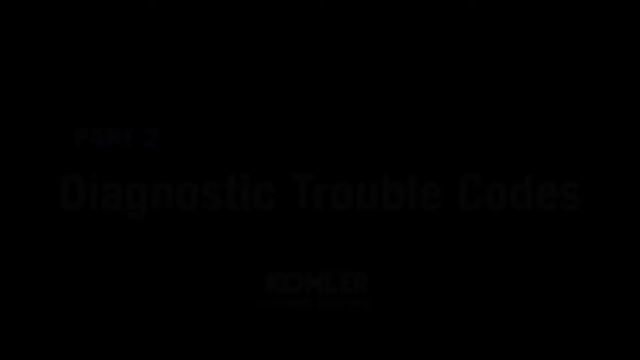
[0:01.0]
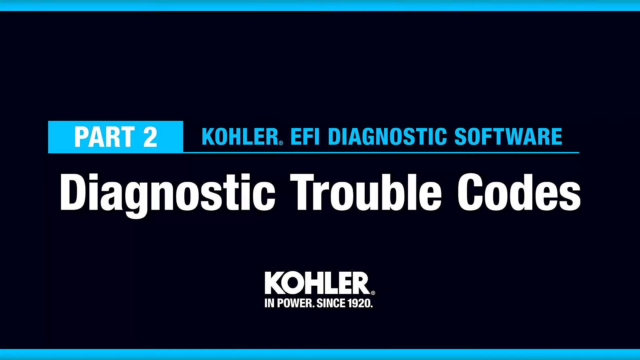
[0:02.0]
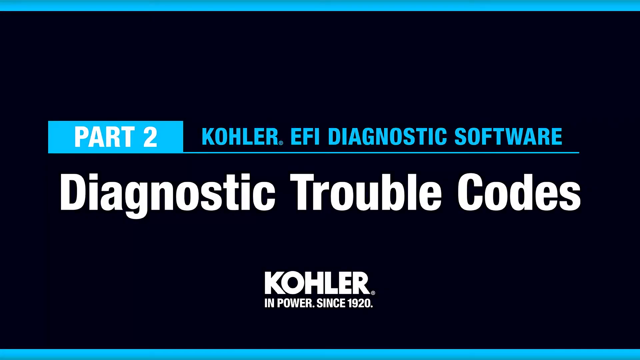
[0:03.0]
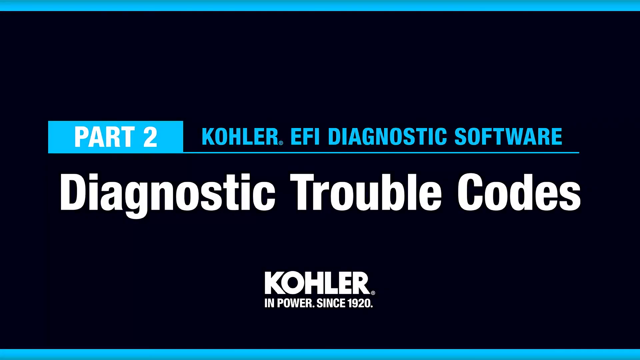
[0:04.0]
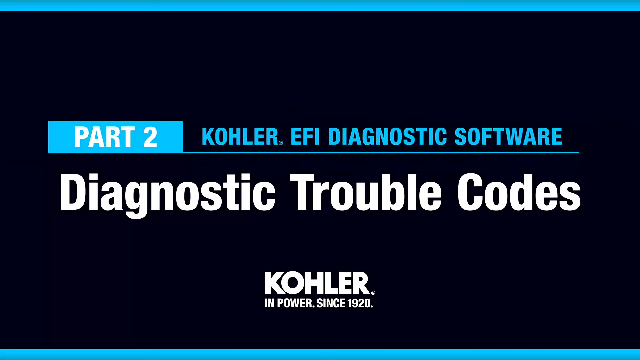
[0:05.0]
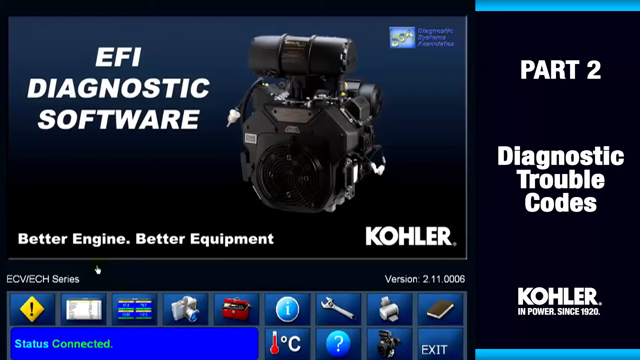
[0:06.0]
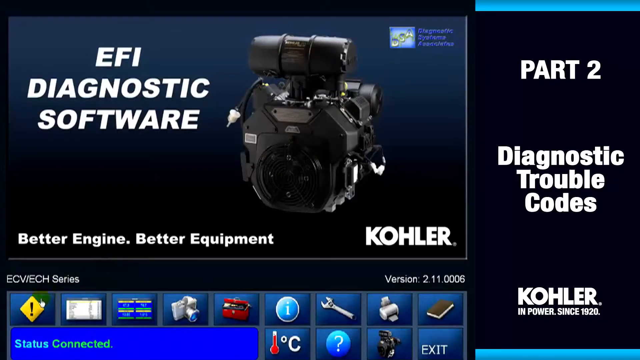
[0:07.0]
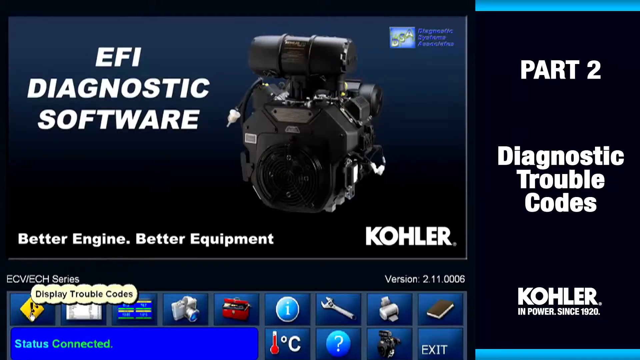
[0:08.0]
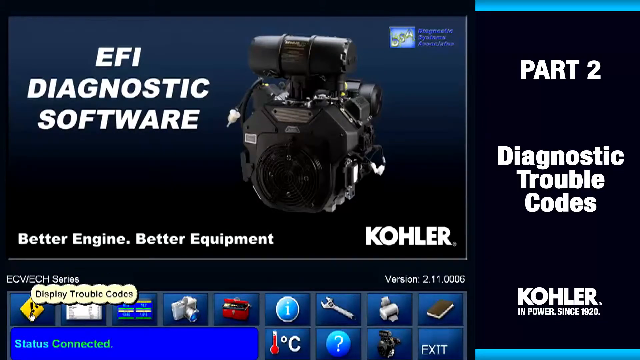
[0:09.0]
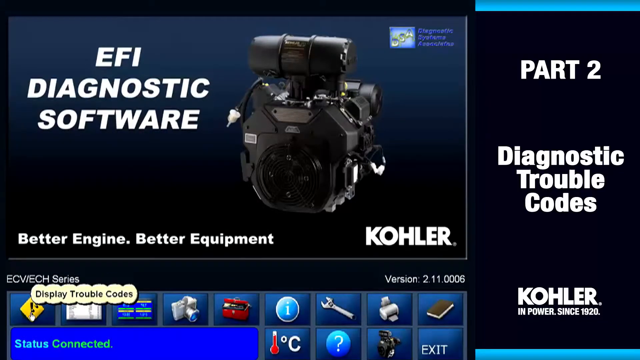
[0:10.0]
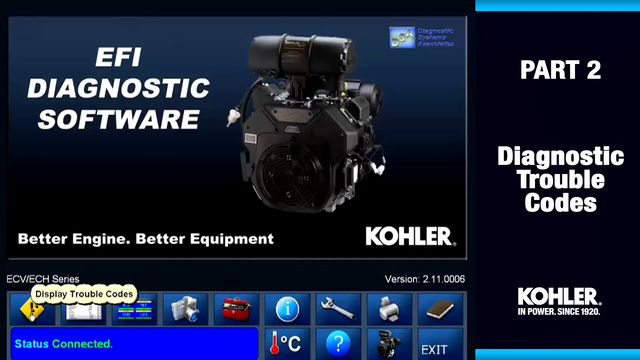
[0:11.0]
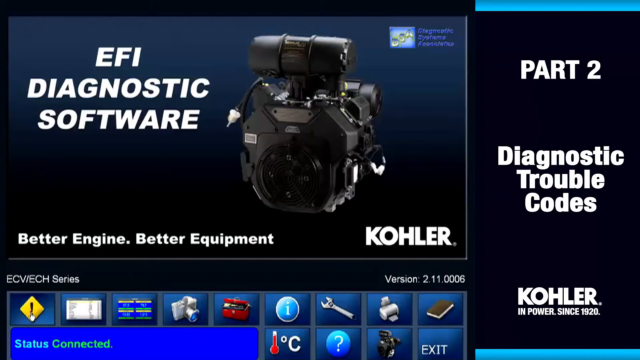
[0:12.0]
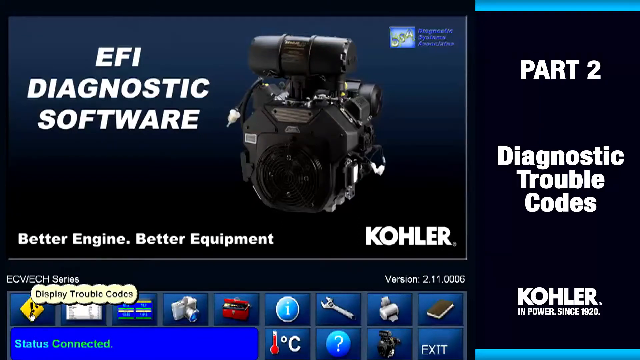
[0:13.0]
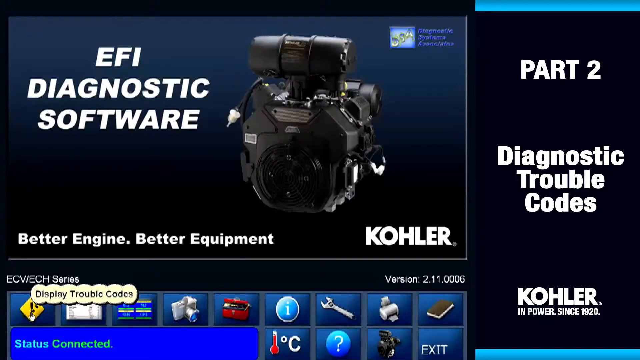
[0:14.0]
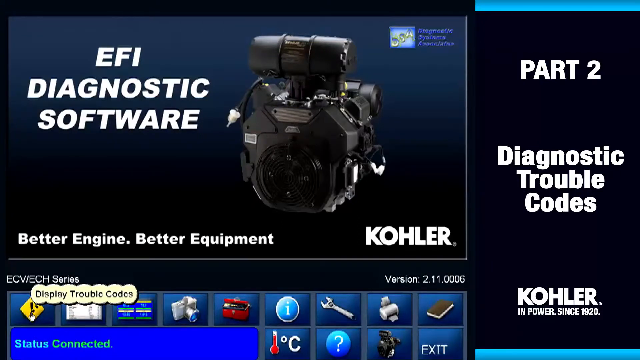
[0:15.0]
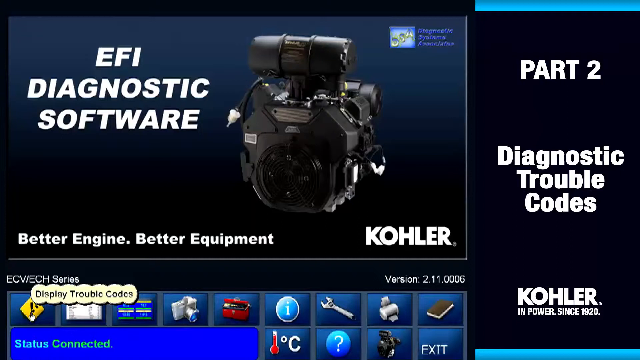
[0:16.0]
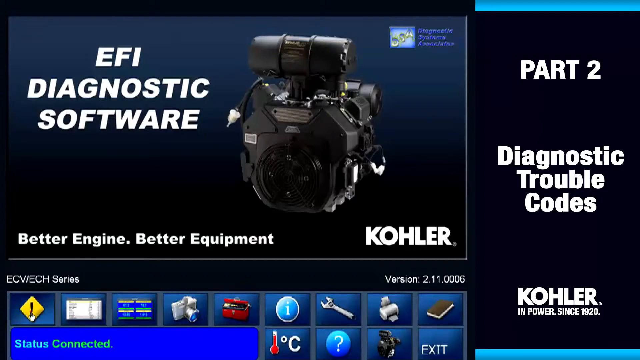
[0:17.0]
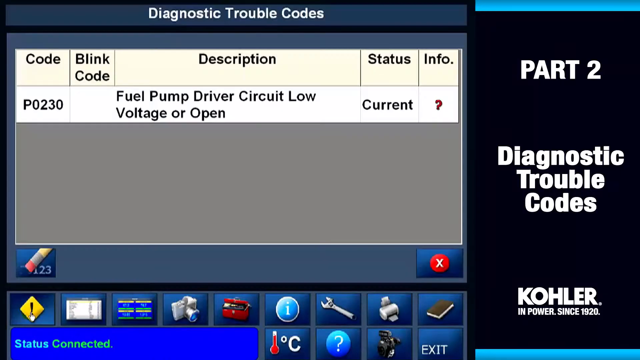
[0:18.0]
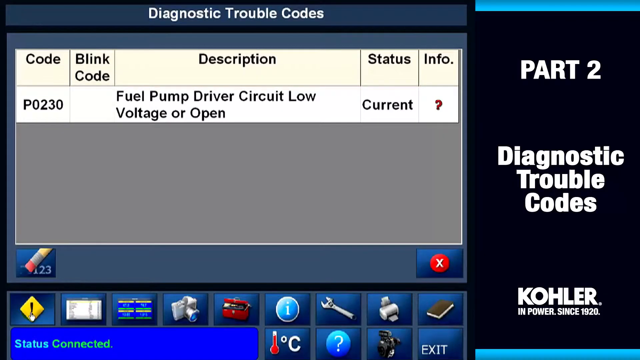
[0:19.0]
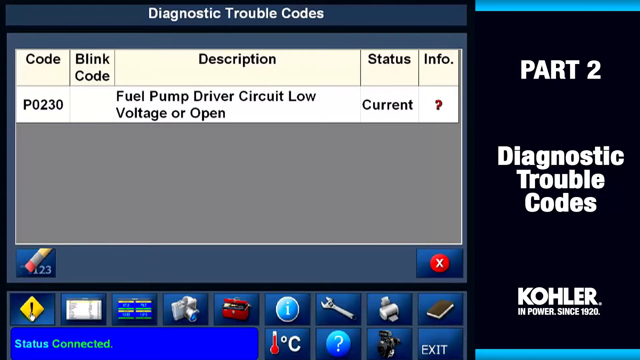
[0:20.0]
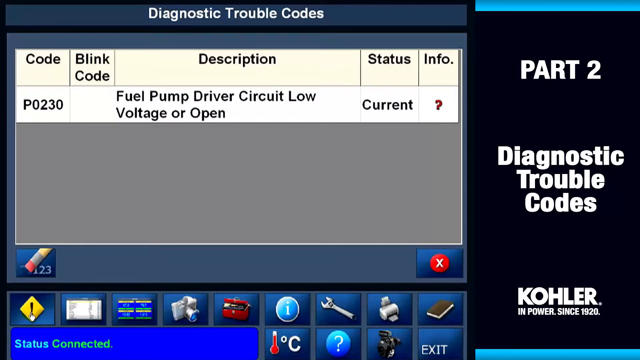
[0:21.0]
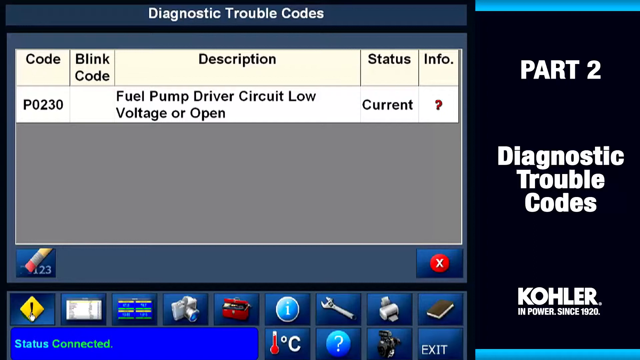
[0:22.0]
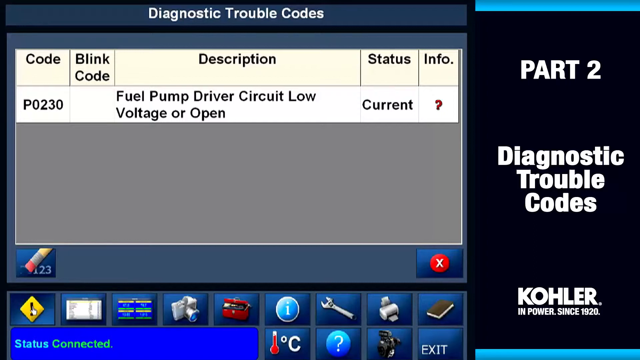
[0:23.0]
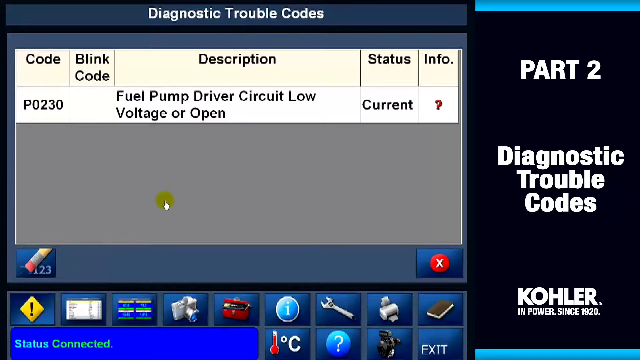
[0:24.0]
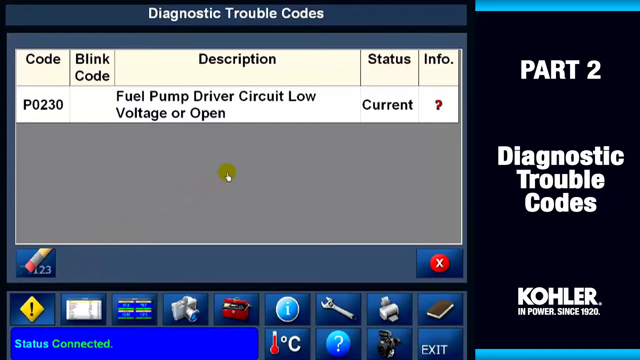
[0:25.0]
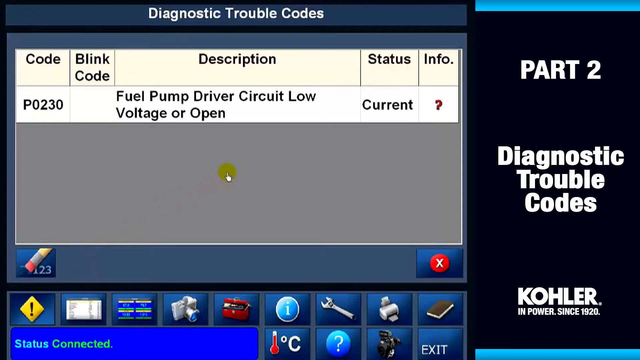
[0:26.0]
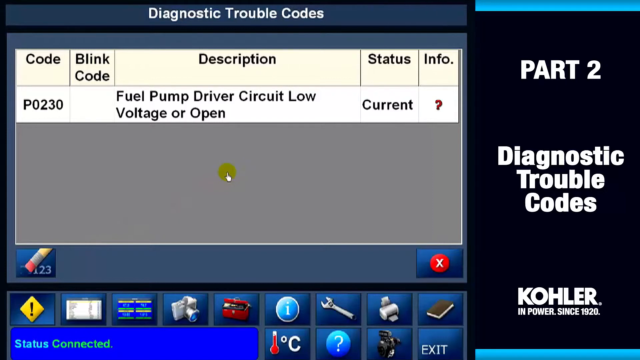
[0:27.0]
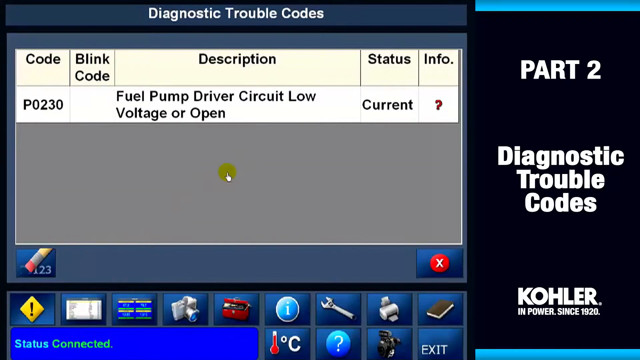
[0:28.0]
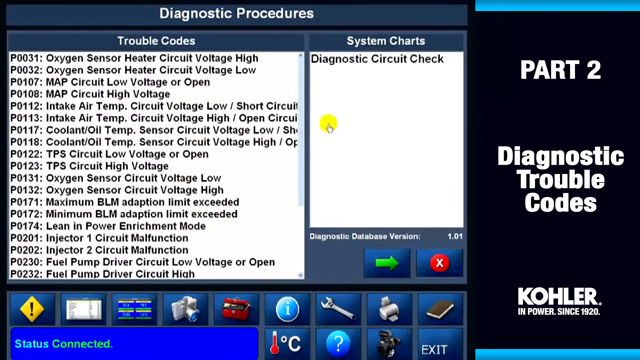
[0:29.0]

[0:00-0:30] The video opens with on-screen text reading "Part 2", "Diagnostic Software", "Diagnostic Trouble Codes" and "Kohler in power since 1920". Another screen reads "EFI diagnostic software, better engine, better equipment" and "Display trouble codes". A black object is shown; it is unclear whether it is an engine or a camera. Next, a screen reads "Diagnostic trouble codes" with code "P0230", apparently for a car, and the text "Fuel pump driver circuit low voltage or open", "Status current" and "Info" with a question mark. A cursor moves in the middle of the screen, and the view then goes to "Trouble codes" and "System chart". The system chart reads "Diagnostic circuit check", followed by a set of trouble codes and "Diagnostic database version".